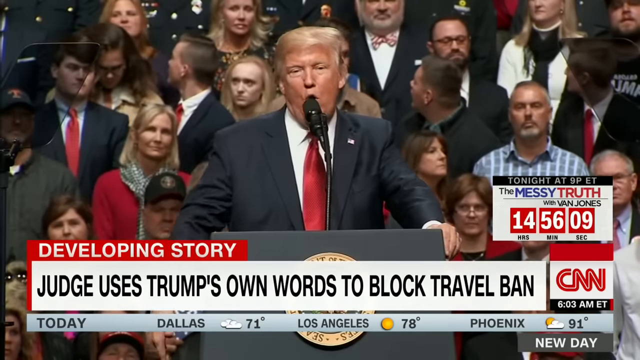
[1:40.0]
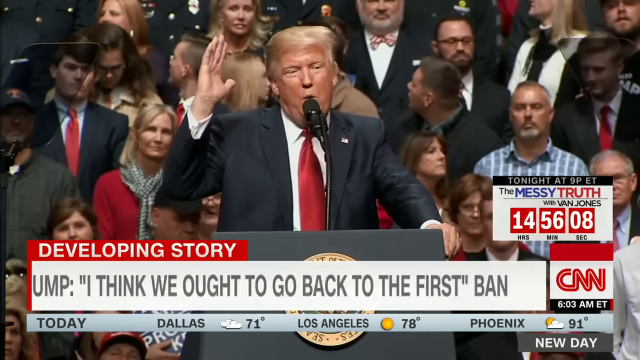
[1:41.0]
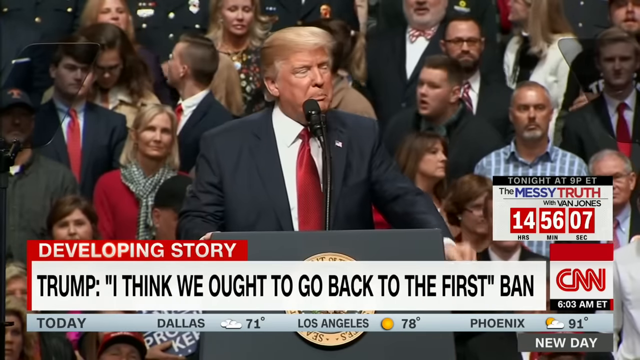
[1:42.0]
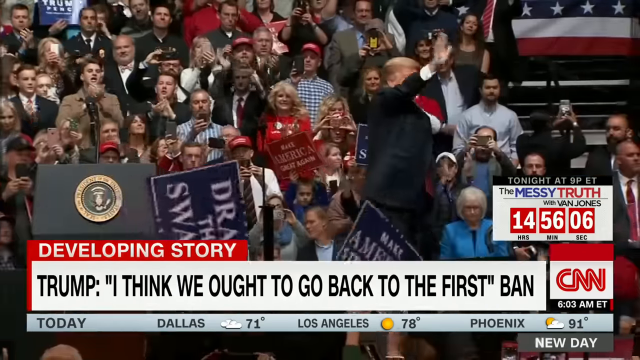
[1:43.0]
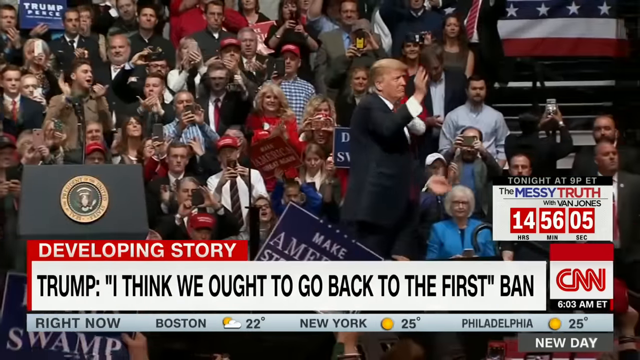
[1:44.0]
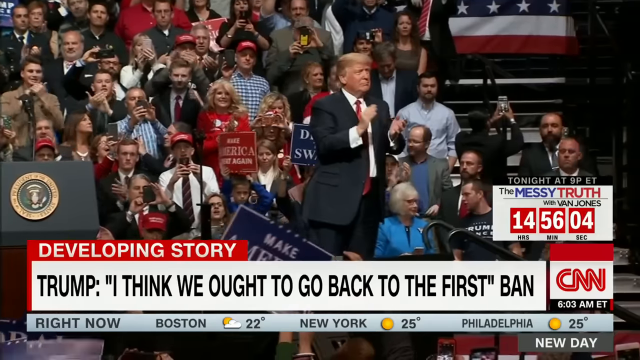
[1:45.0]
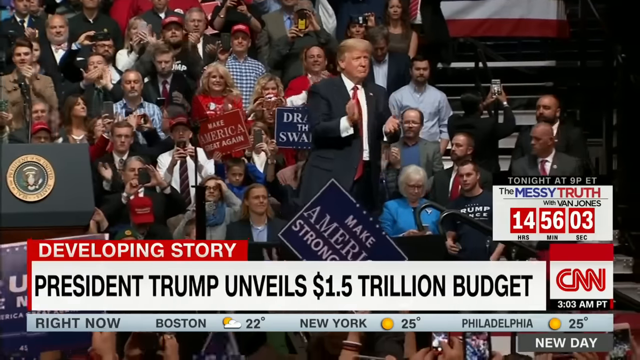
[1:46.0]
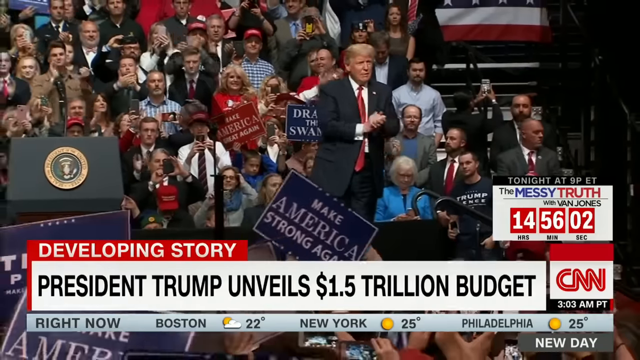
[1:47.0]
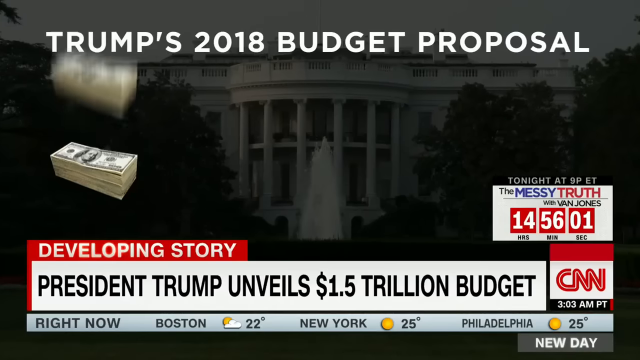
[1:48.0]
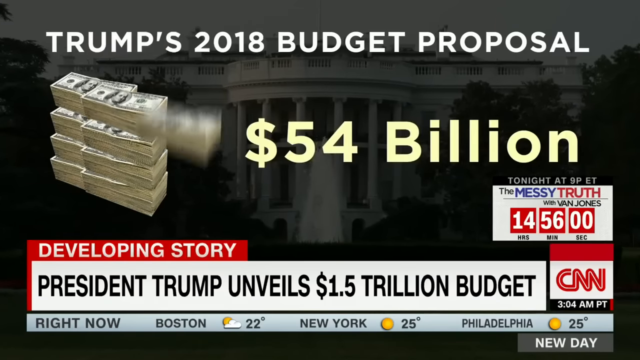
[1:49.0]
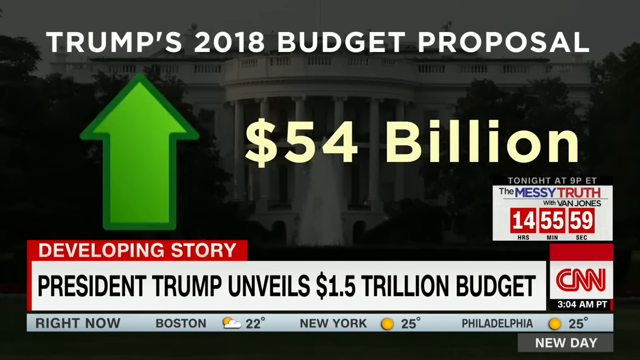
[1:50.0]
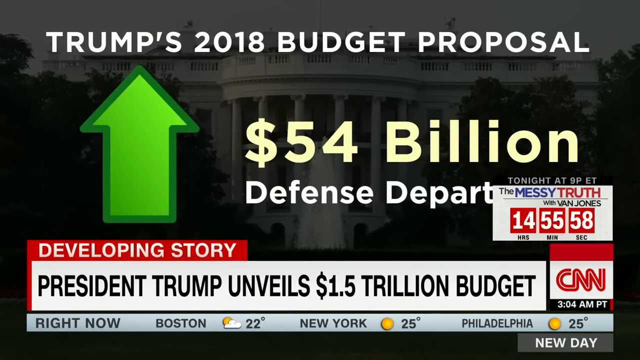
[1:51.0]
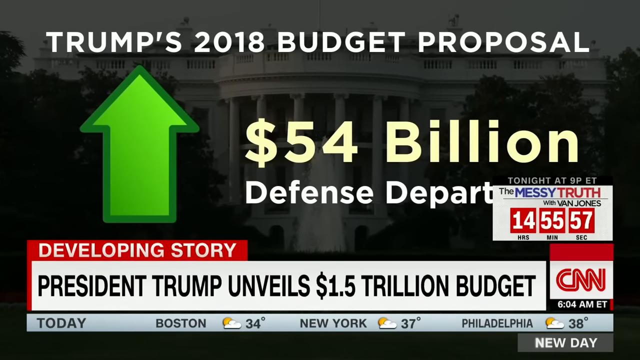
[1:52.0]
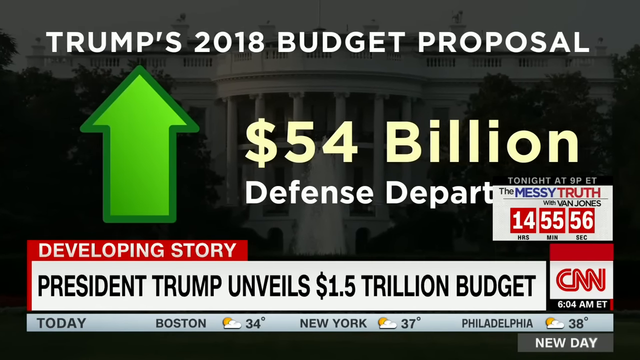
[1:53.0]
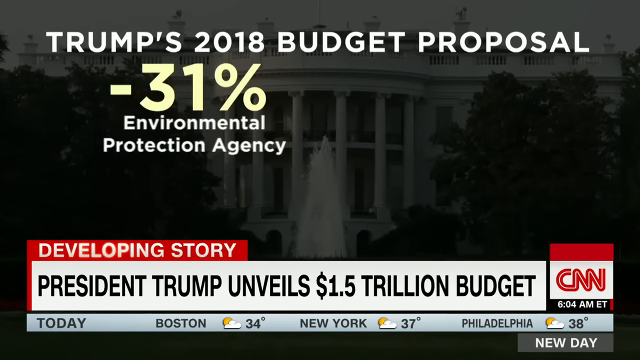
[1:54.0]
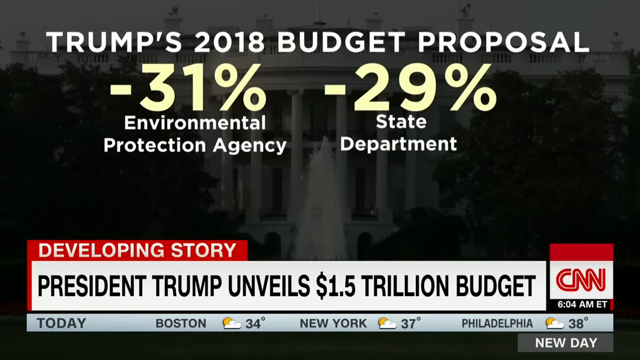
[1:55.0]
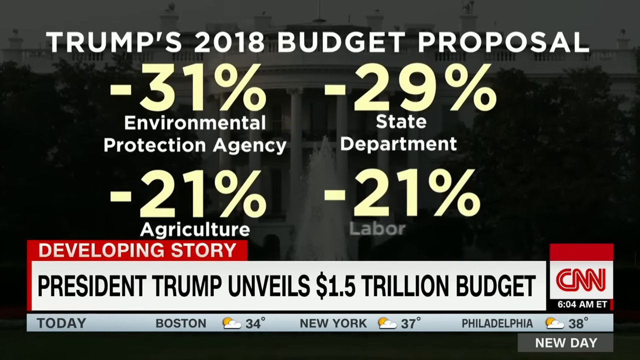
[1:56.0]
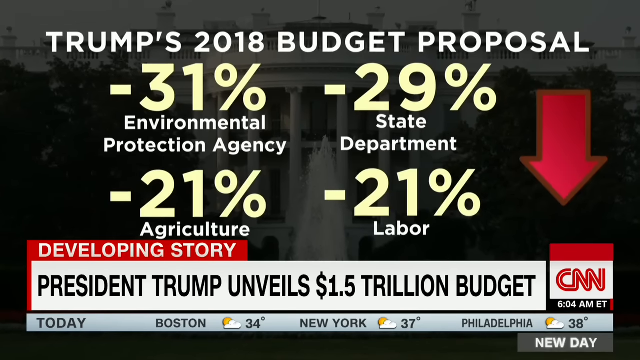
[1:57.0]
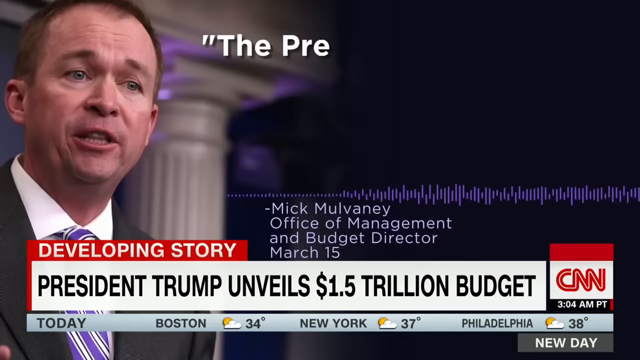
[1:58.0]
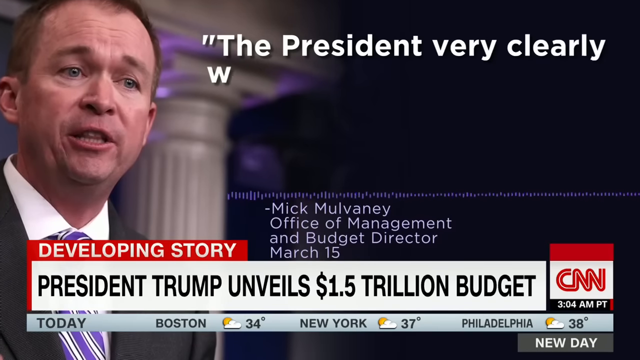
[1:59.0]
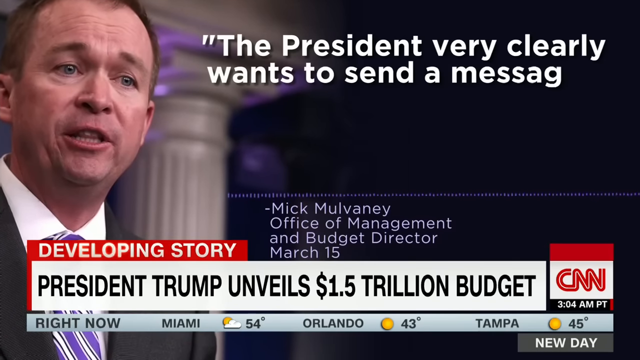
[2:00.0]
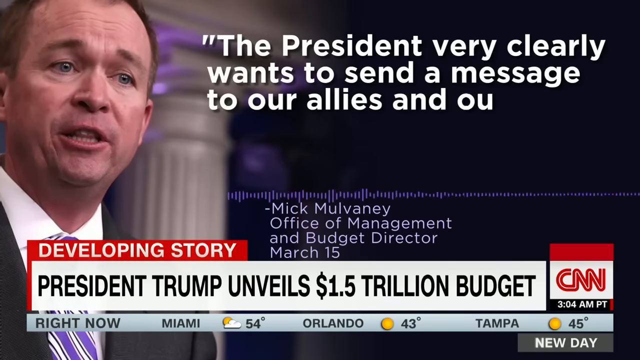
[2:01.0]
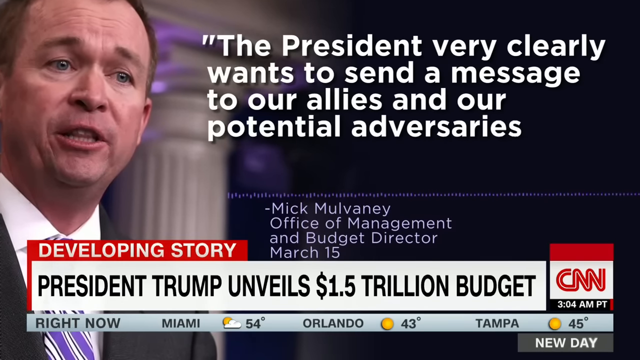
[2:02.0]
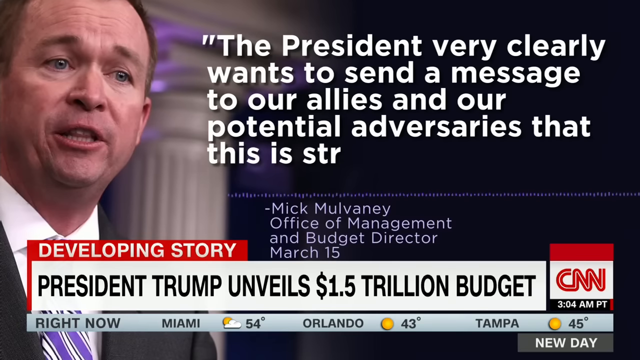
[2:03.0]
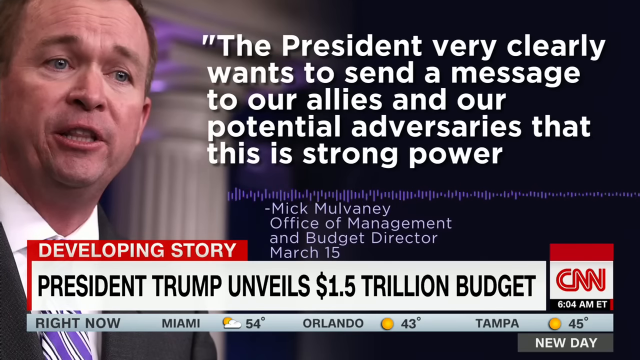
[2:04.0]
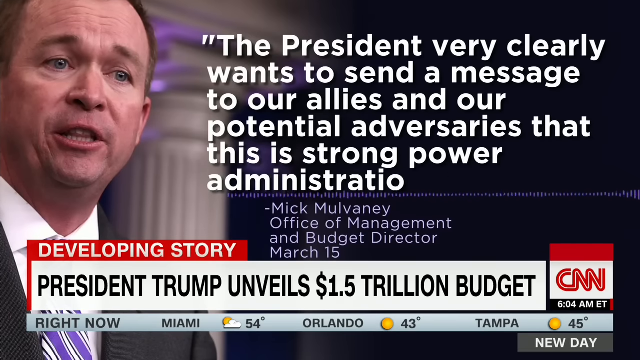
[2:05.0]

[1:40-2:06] The news story about Trump's travel ban wraps up; text on the screen indicates that a judge rejected the ban and said it was unconstitutional. The story then transitions into a brief story about Trump's budget, which plans to increase the defense budget by $54 billion, will cost $1.5 trillion, and cuts departments such as the Environmental Protection Agency, the State Department and the Department of Agriculture. The story ends with a quote from Mick Mulvaney, the Office of Management and Budget Director, stating that the budget sends a message to allies and potential adversaries.